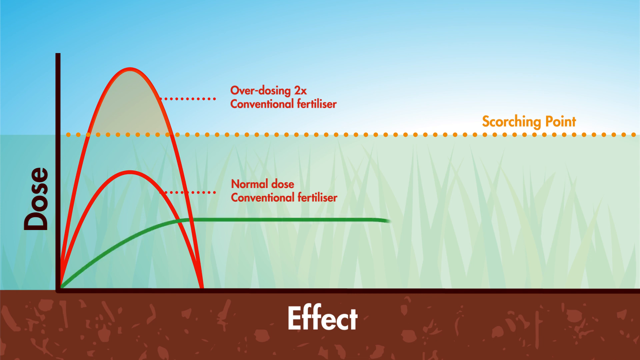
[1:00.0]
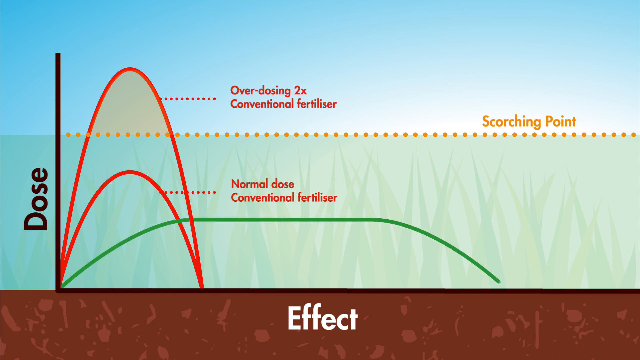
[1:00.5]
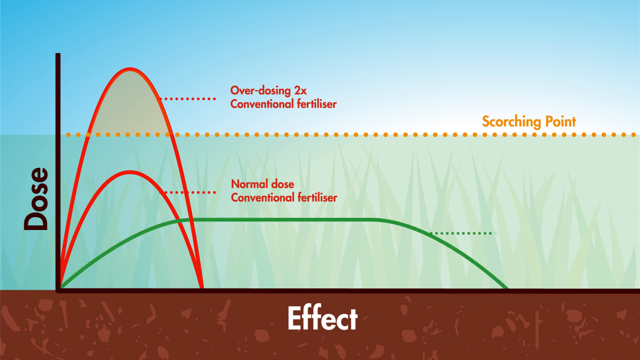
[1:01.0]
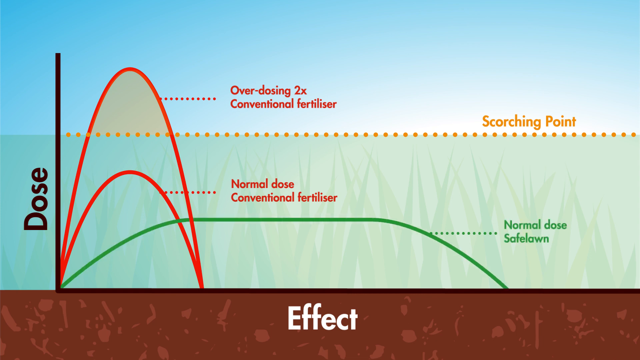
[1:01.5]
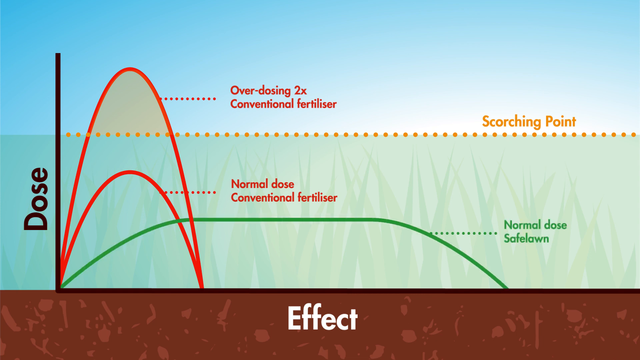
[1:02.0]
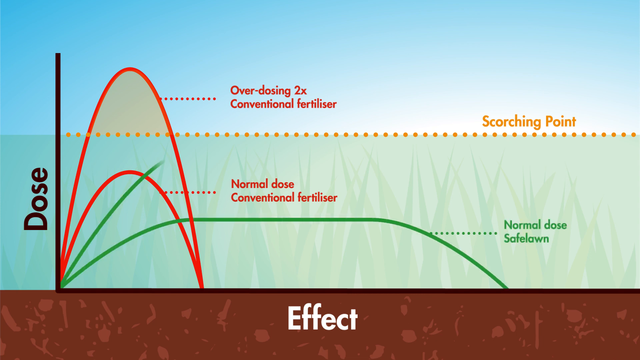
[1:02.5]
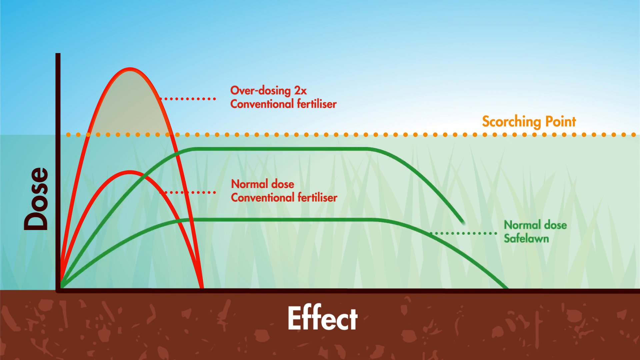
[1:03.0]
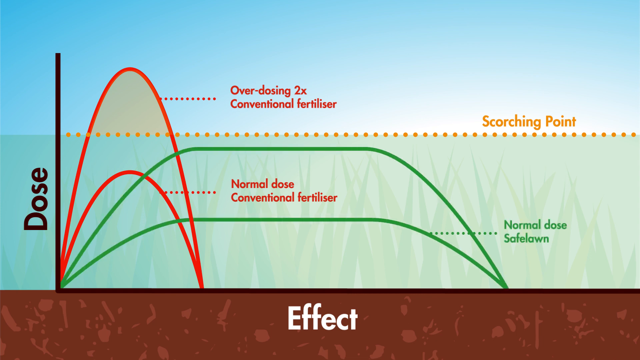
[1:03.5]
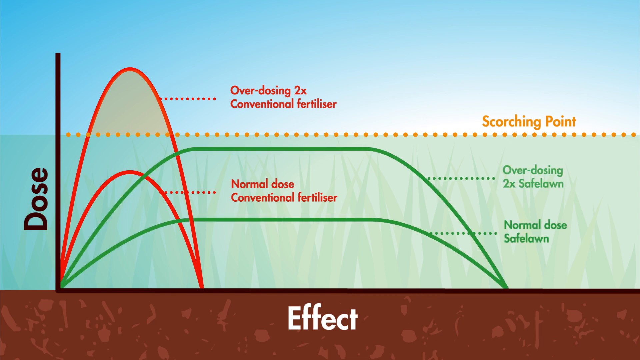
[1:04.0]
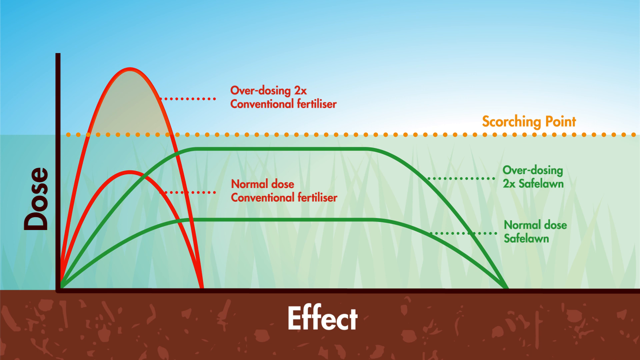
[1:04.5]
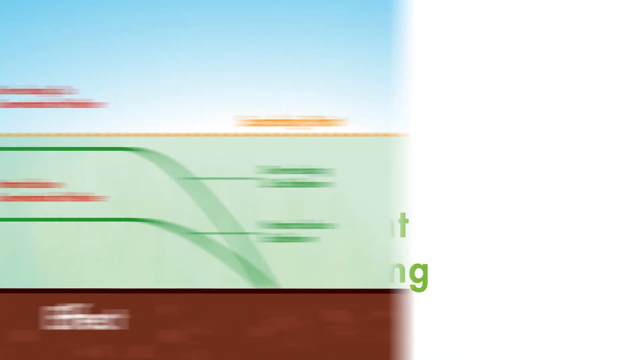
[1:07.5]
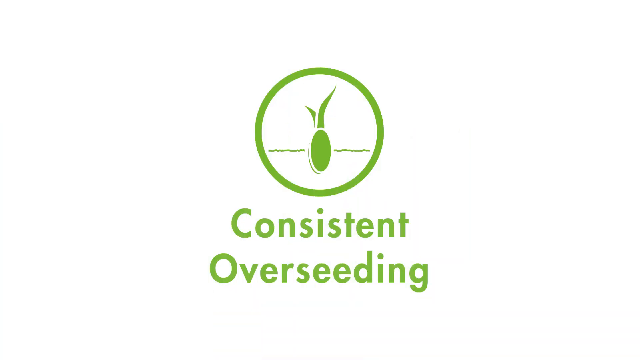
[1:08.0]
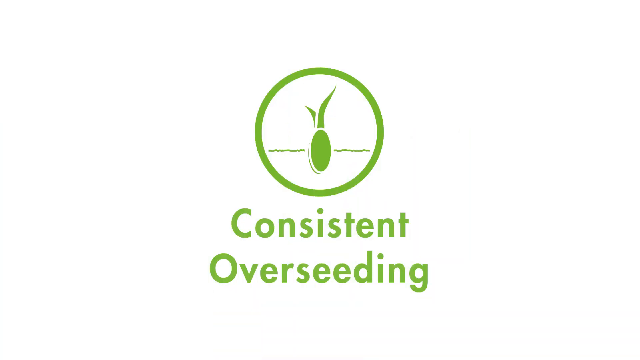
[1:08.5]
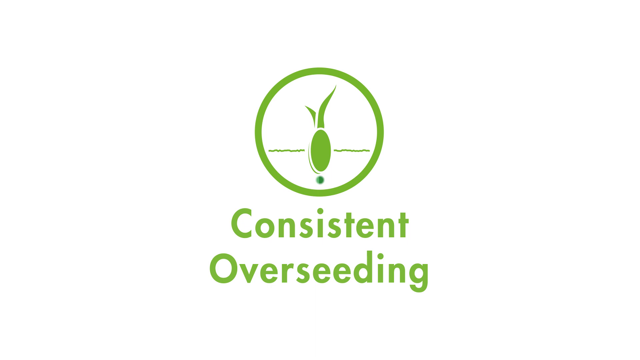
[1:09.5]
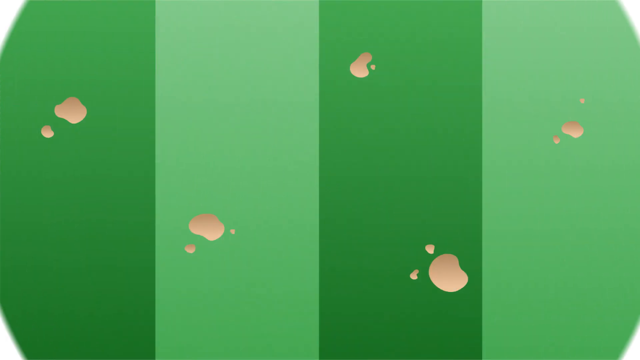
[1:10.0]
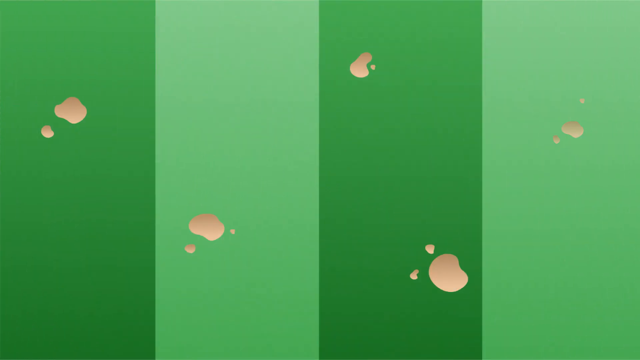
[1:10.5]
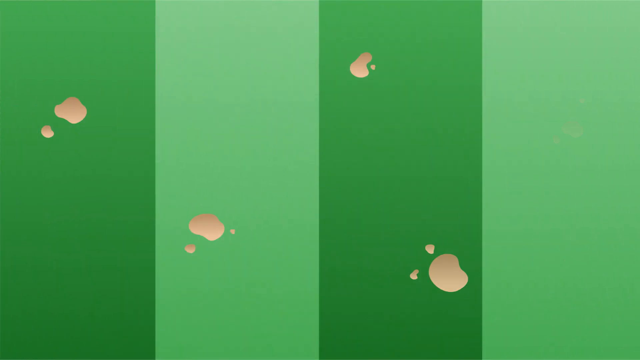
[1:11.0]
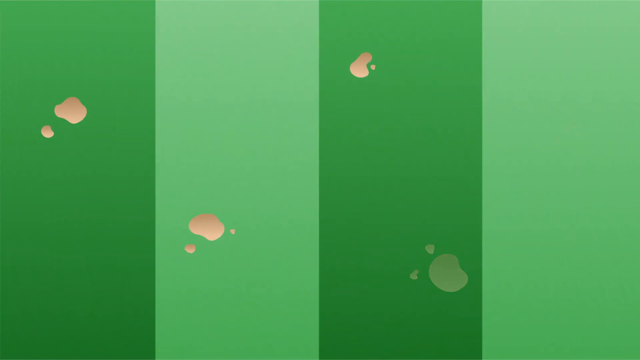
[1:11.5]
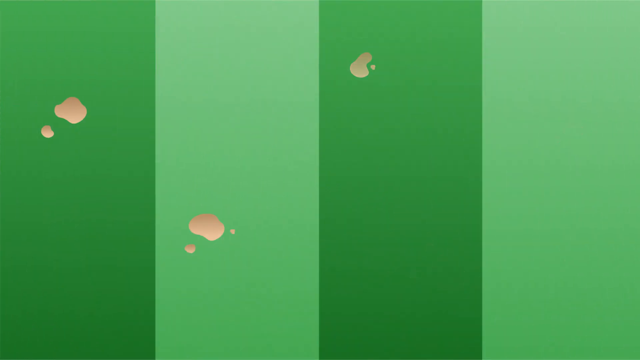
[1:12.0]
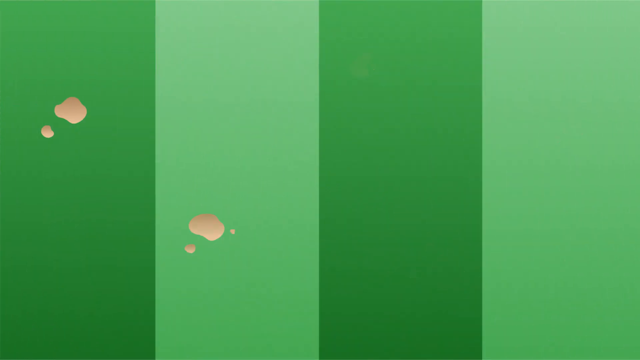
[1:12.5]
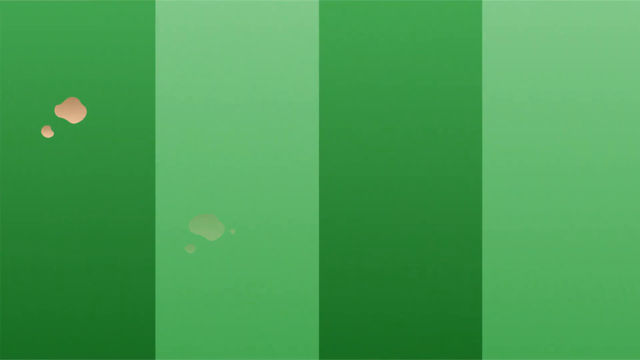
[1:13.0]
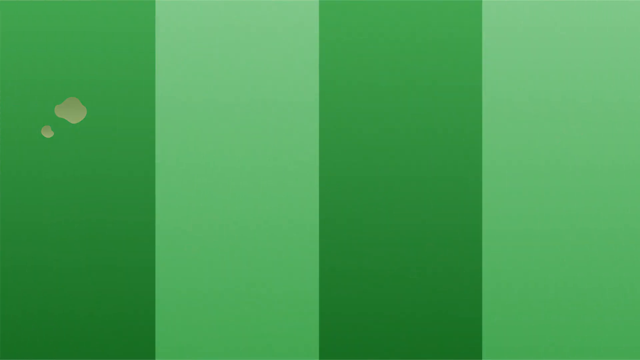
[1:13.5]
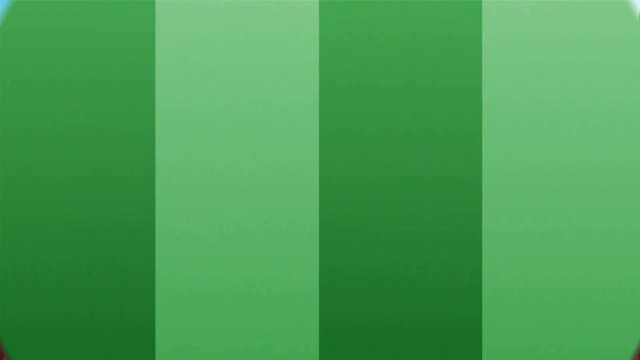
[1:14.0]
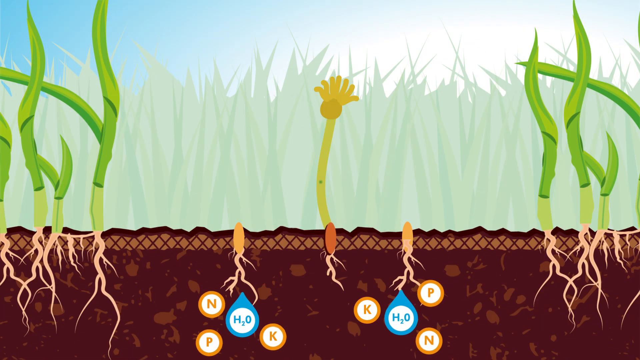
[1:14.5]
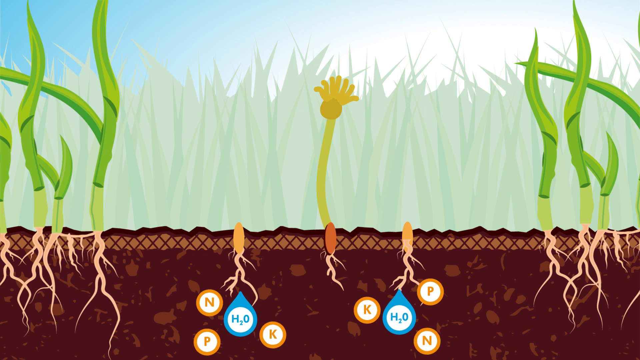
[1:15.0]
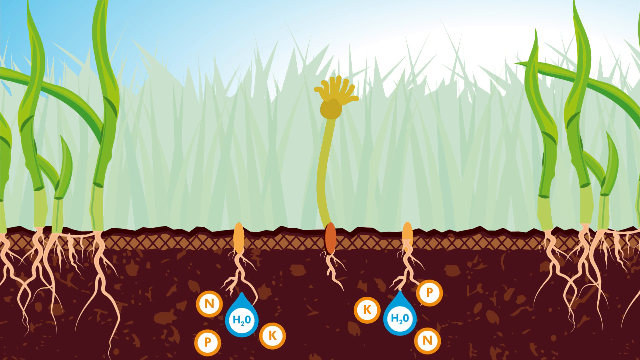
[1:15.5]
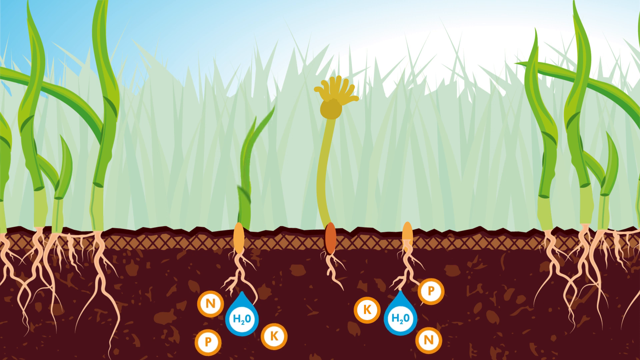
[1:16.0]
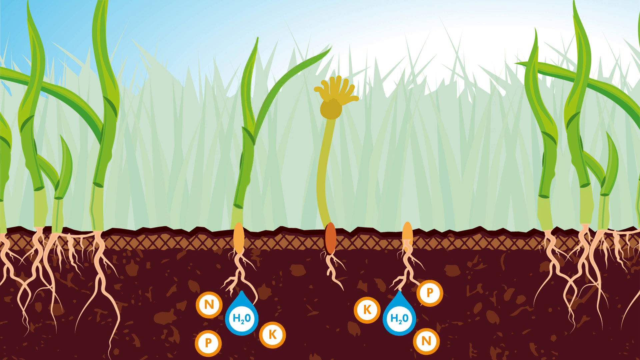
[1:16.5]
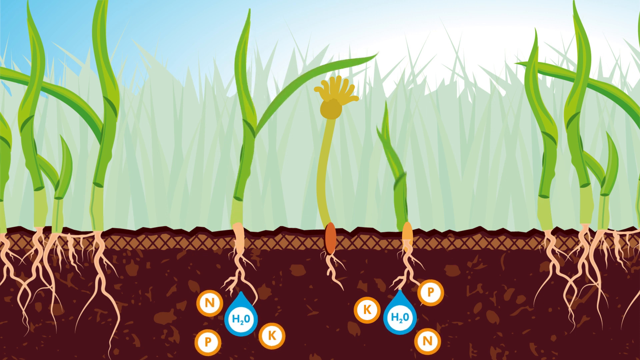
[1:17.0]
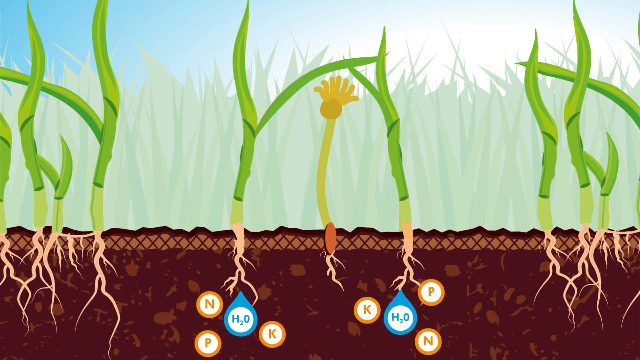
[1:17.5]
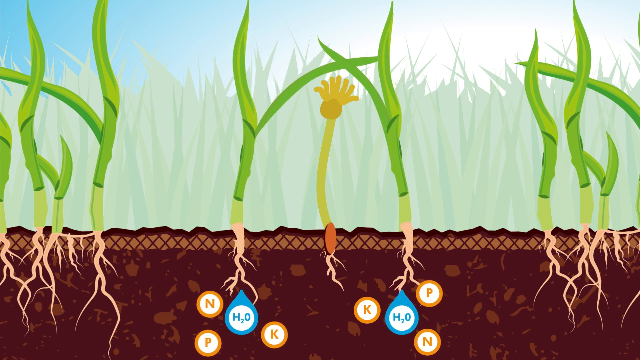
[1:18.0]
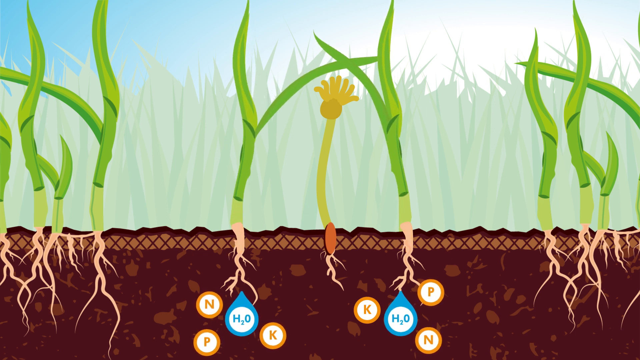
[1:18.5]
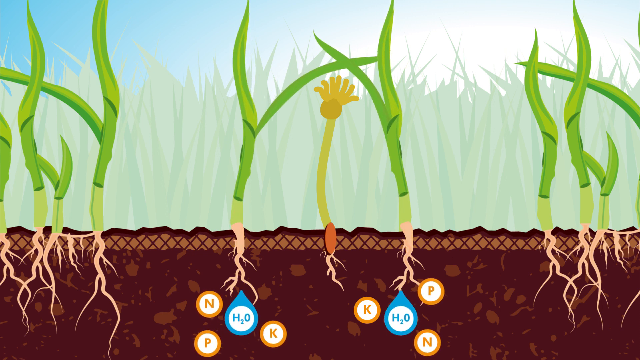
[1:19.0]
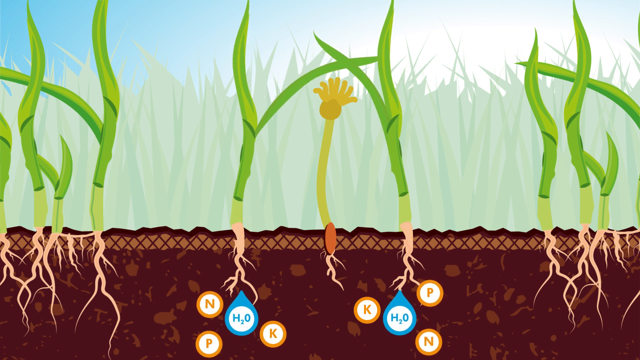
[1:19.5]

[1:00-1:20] A table compares consistent overseeding between conventional fertilizer and natural safe lawn, and the difference is very visible. The normal dose of conventional fertilizer is much higher than the normal dose for safe lawn. The overdose, or two times dose, for natural safe lawn is much lower and stays under the scorching point, while conventional fertilizer goes beyond the scorching point.